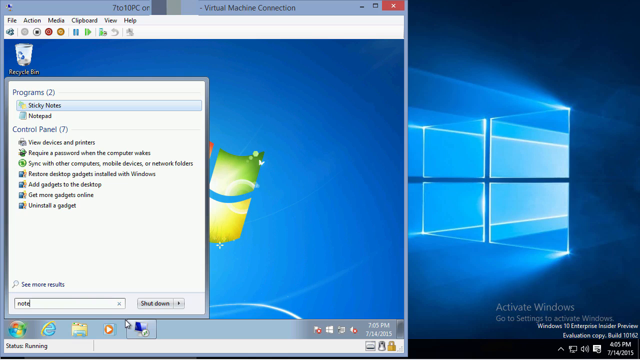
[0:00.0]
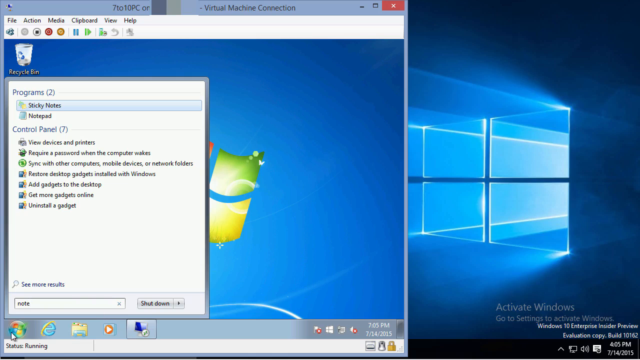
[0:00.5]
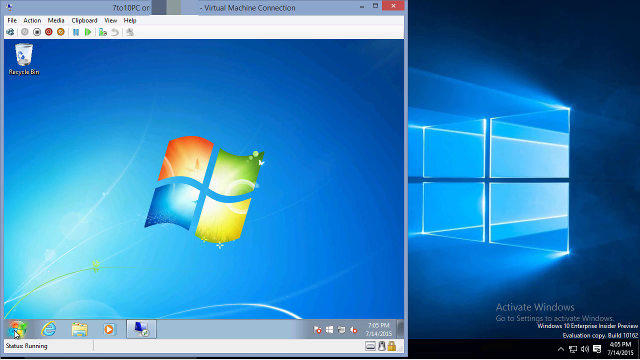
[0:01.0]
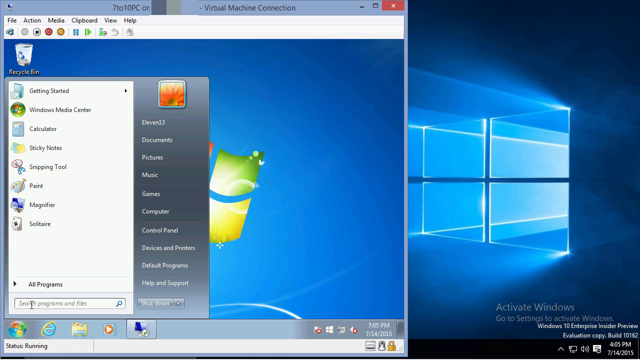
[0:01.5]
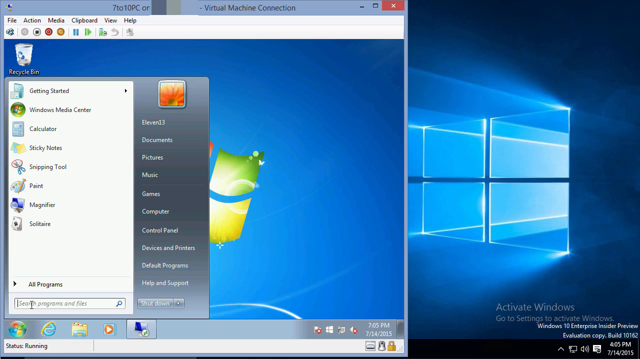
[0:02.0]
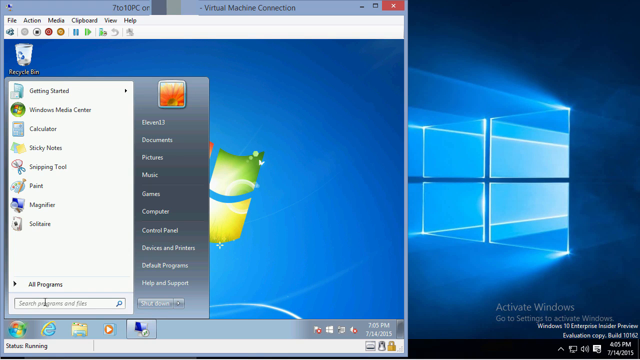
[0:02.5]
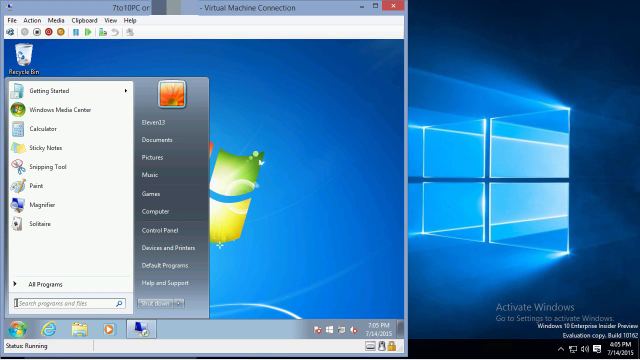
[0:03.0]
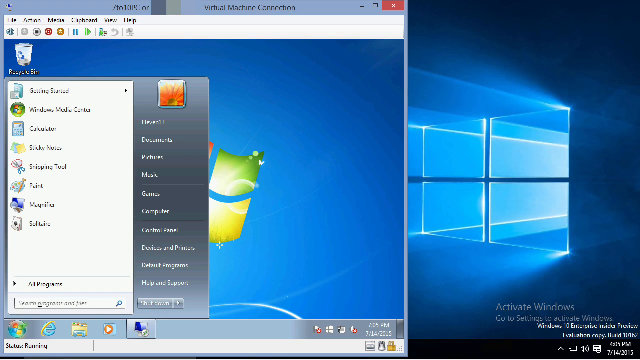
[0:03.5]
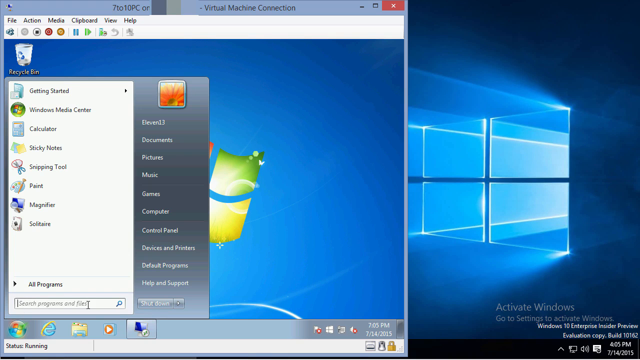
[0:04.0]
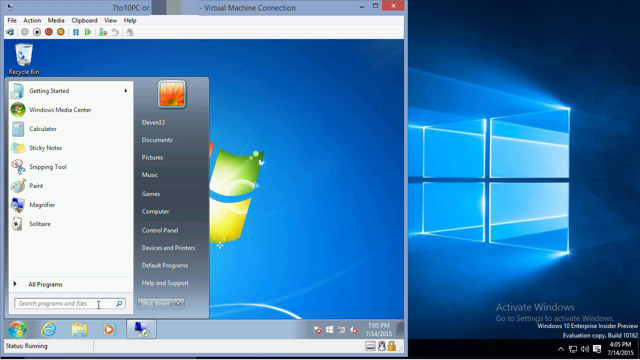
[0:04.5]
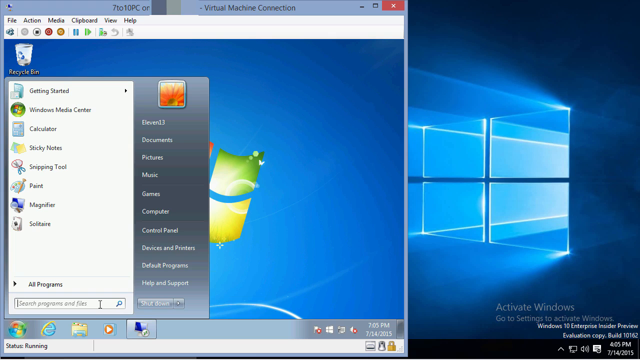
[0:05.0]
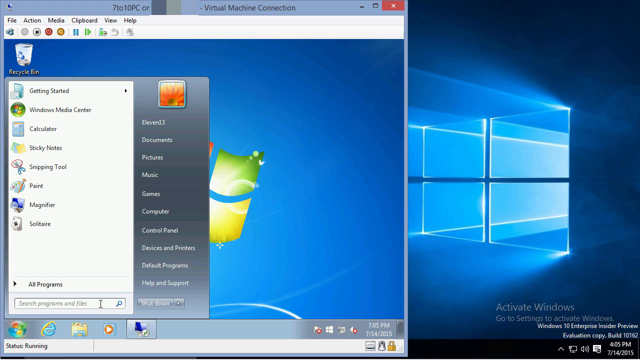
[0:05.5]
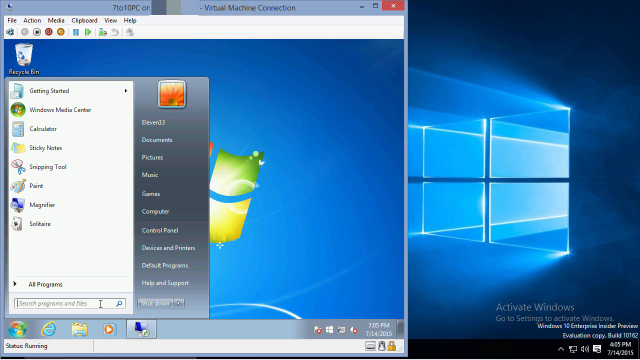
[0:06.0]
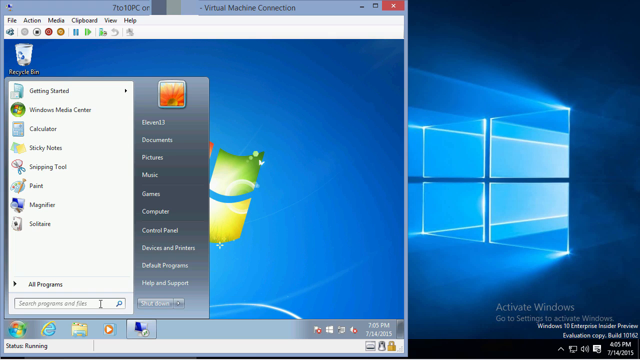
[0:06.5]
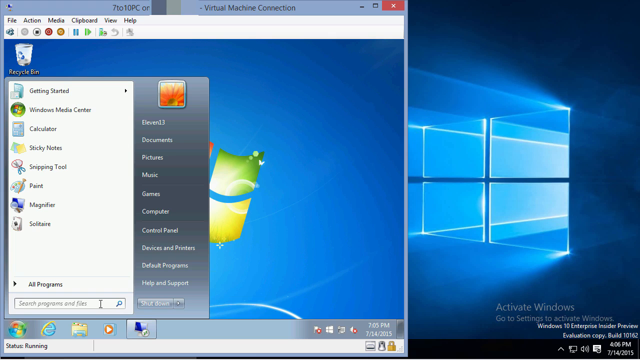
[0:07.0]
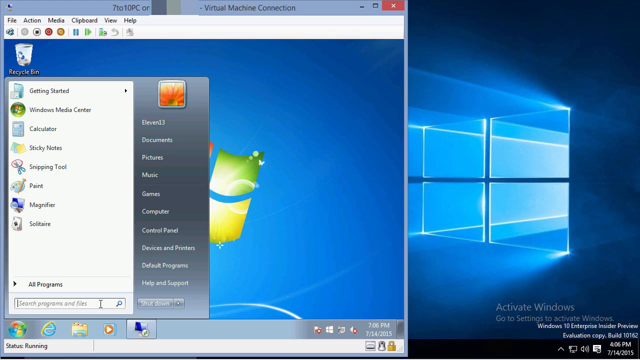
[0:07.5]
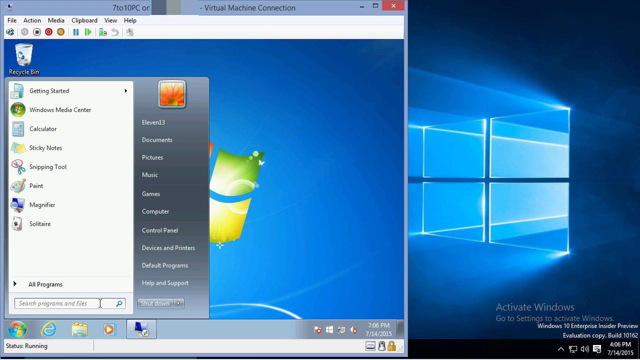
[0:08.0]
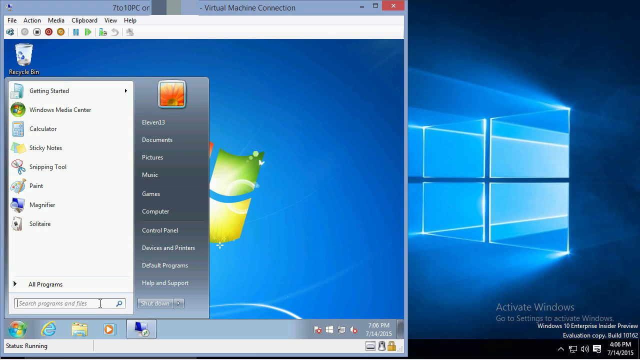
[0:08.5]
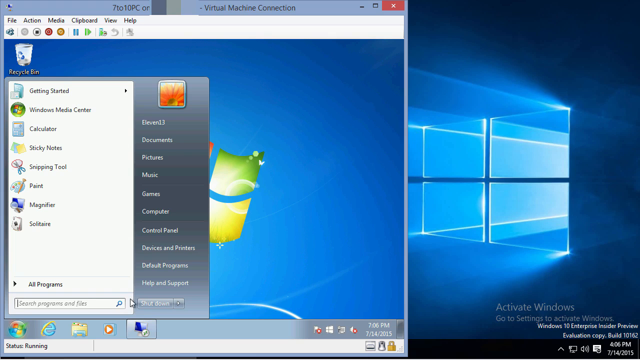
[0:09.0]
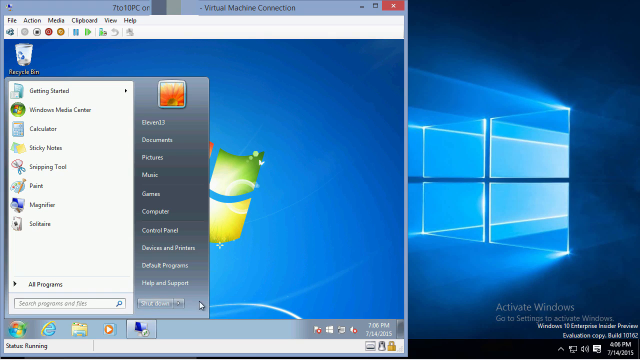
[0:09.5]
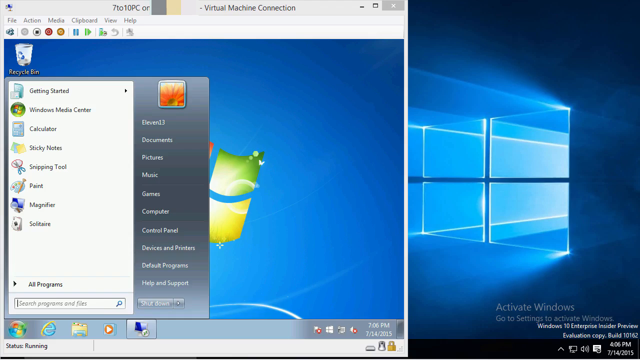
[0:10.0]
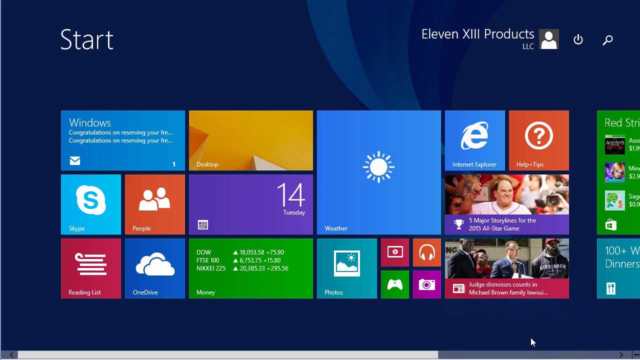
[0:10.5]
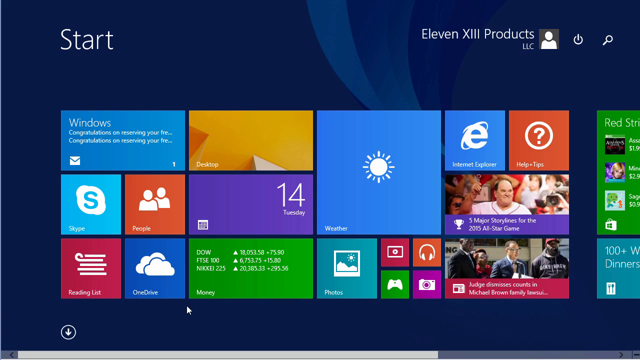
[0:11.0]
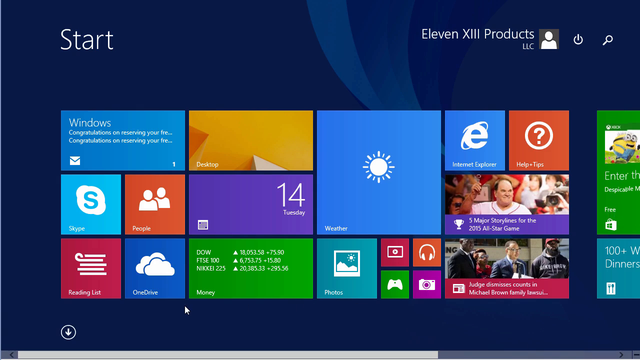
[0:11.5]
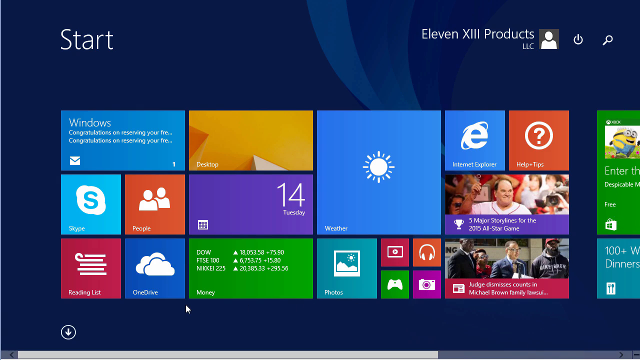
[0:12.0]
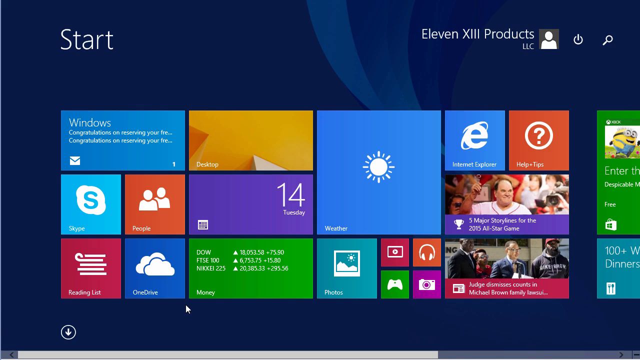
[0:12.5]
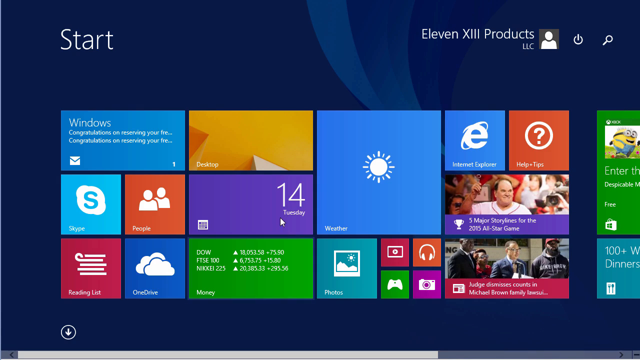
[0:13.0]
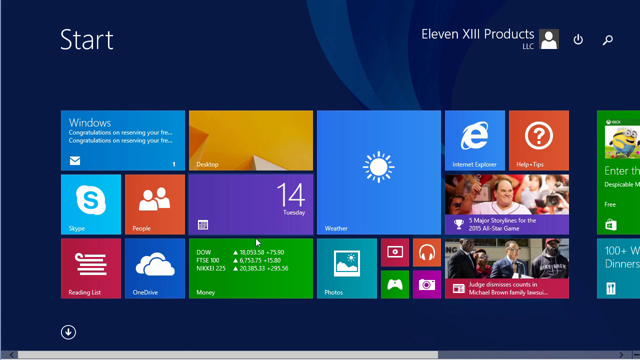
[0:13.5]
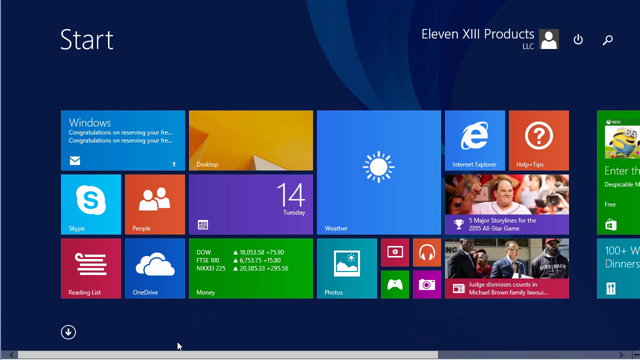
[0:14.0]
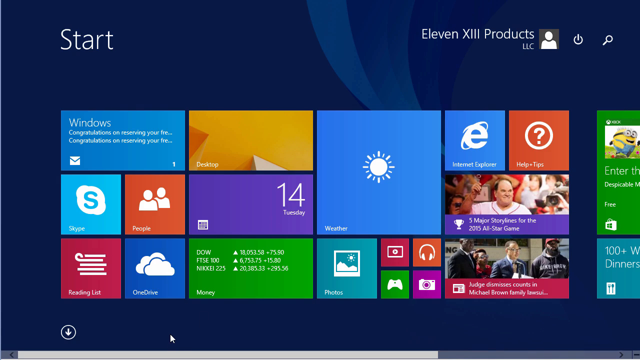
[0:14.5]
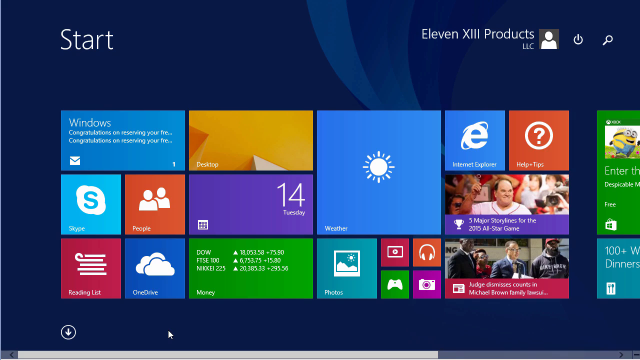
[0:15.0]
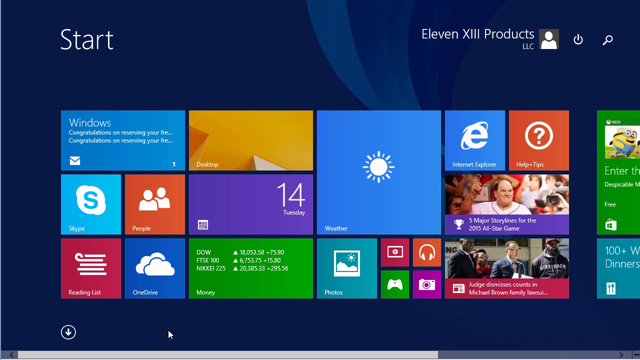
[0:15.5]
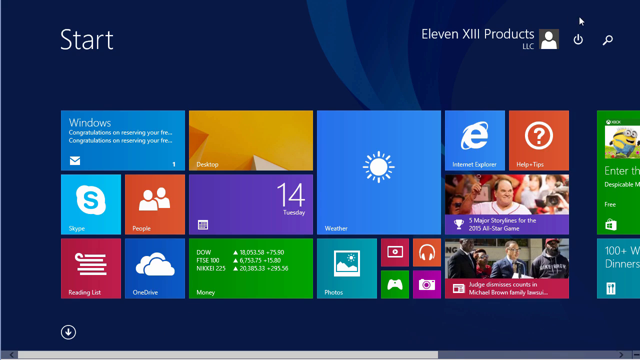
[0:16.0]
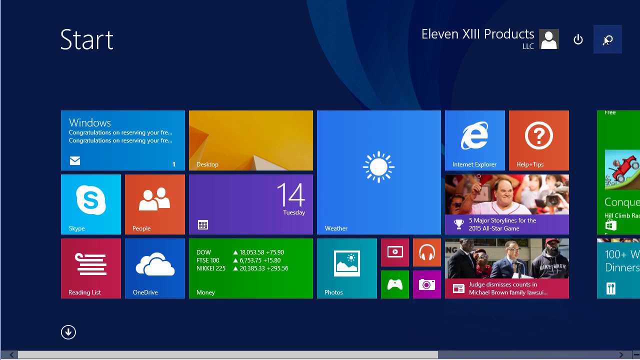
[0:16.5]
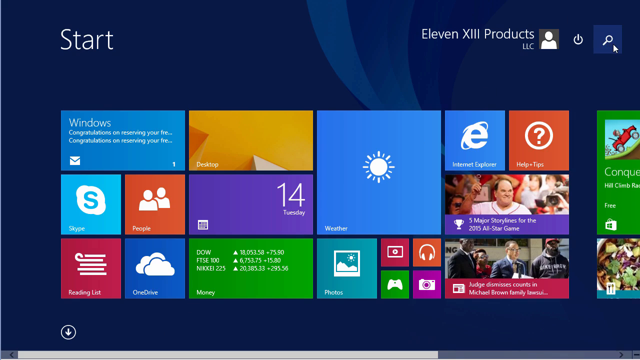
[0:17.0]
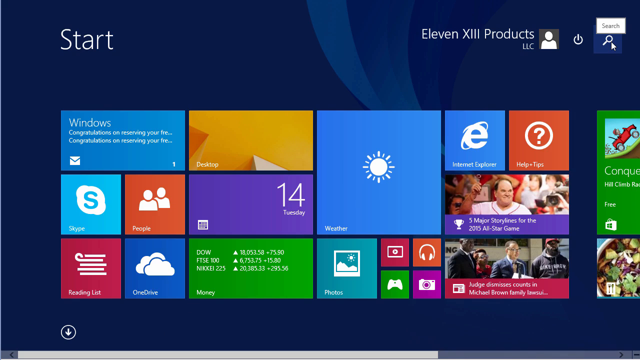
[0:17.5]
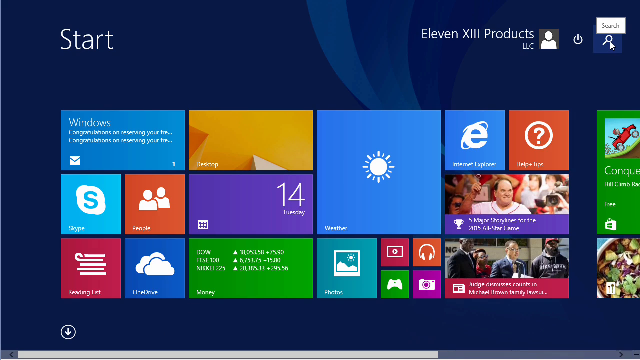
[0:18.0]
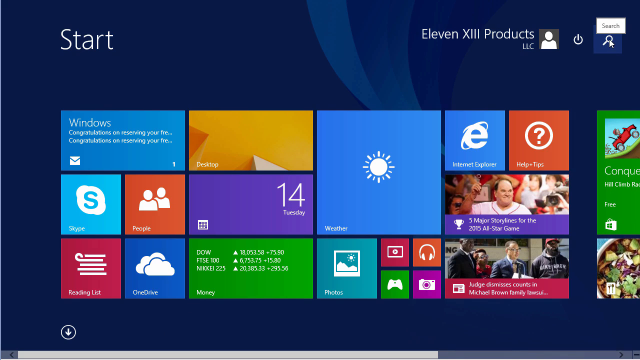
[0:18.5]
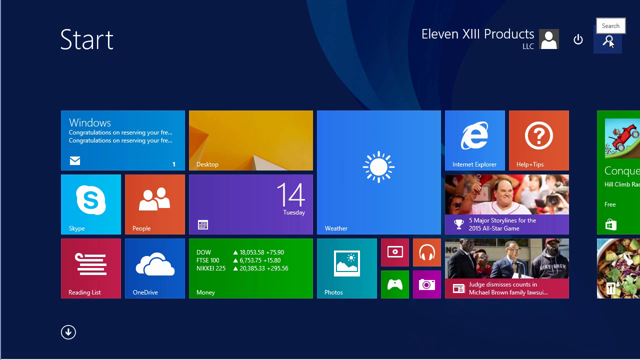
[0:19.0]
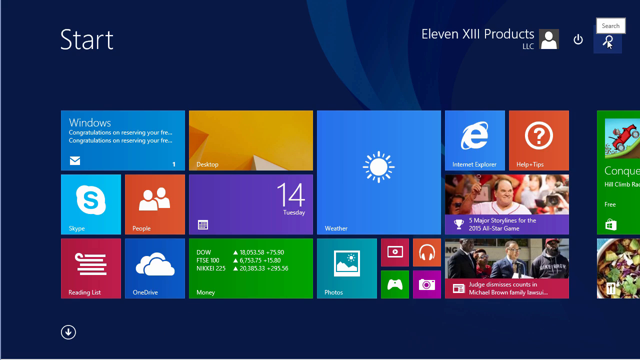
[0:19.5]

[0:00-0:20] The video concerns the Windows search feature. Search had previously been limited to programs and files, but in the newer Windows the search bar appears everywhere: in OneDrive, in the reading list and in Skype, where people and contacts can be searched by name. Searches cover money, such as values, currencies and inflation rates; photos, sorted by the albums they are categorized in; news; and topics like food, fashion shows, TV services and movies, all with Windows 8.